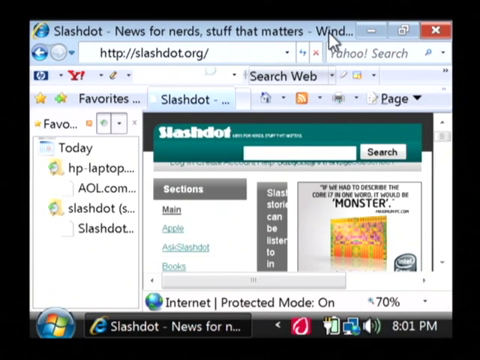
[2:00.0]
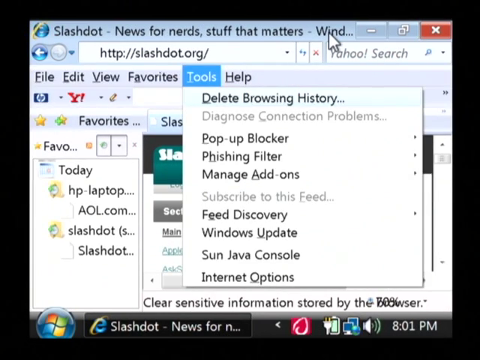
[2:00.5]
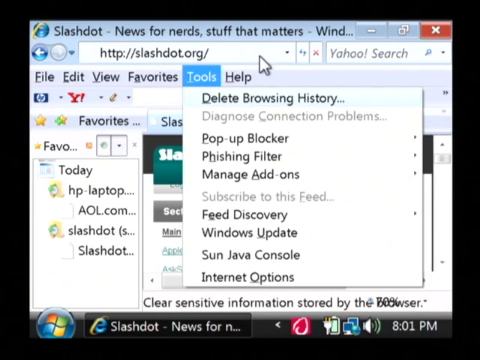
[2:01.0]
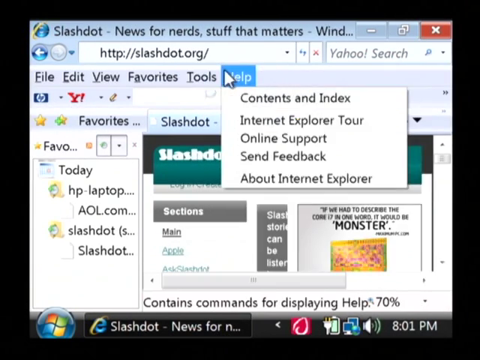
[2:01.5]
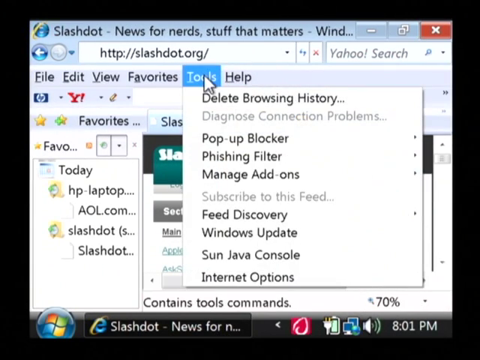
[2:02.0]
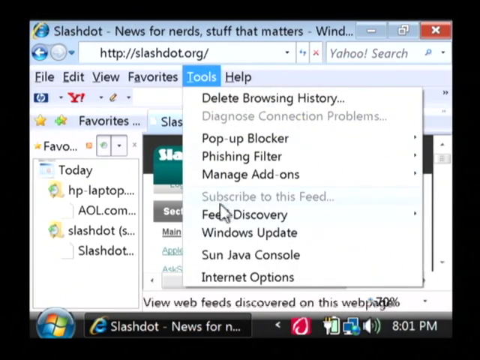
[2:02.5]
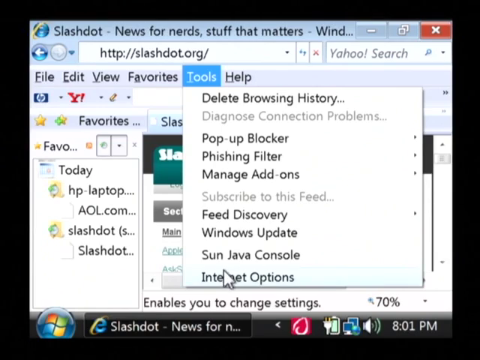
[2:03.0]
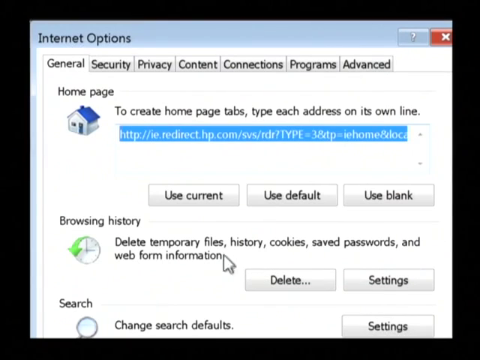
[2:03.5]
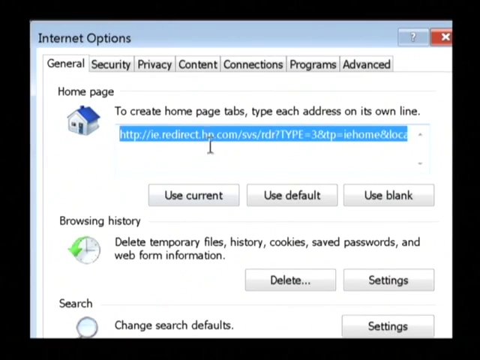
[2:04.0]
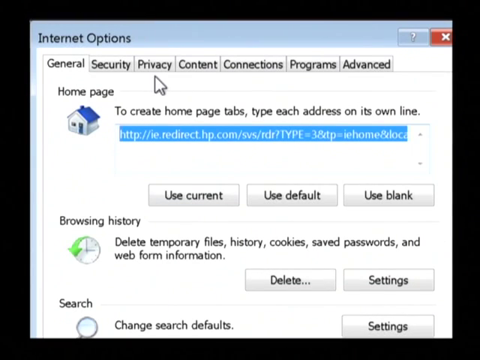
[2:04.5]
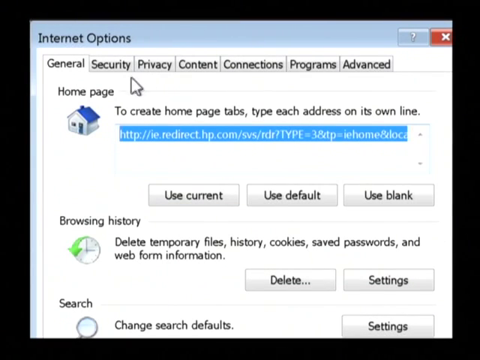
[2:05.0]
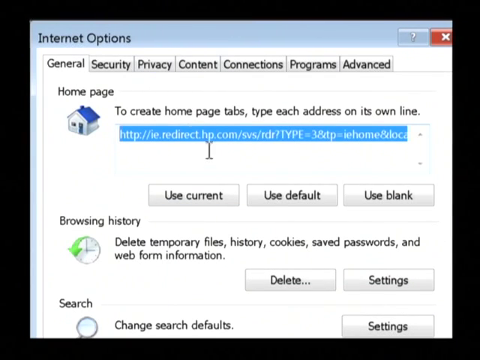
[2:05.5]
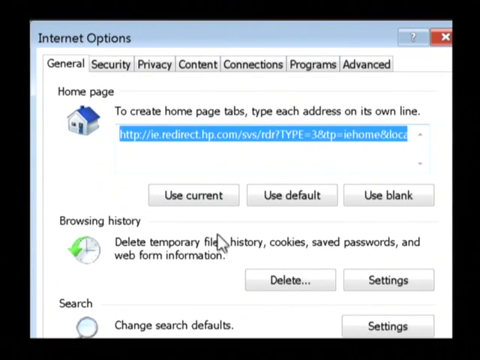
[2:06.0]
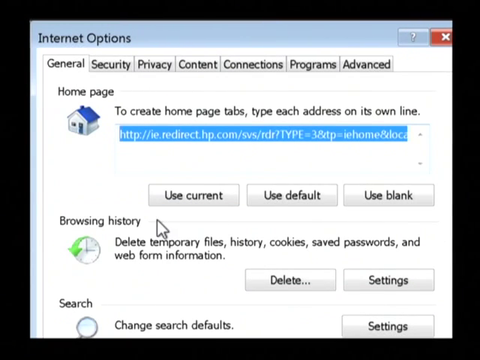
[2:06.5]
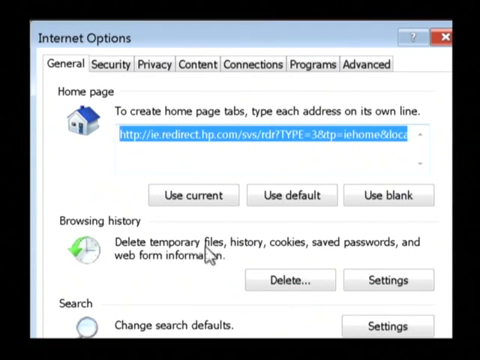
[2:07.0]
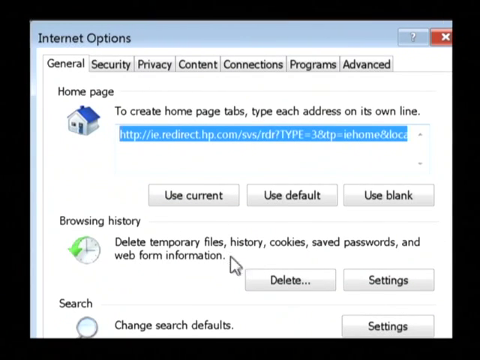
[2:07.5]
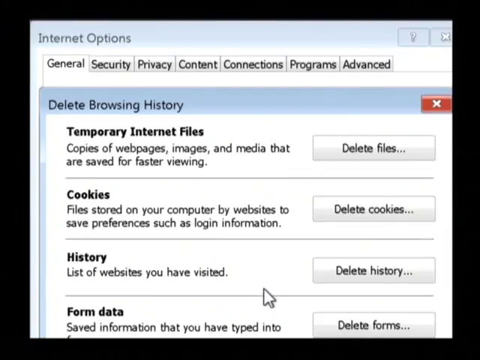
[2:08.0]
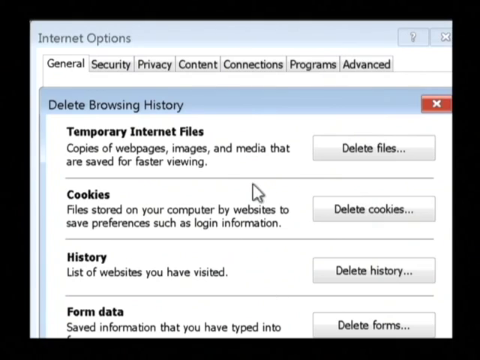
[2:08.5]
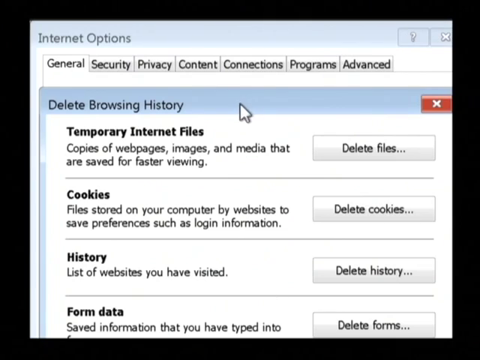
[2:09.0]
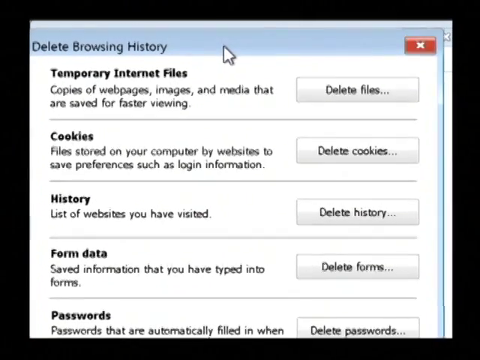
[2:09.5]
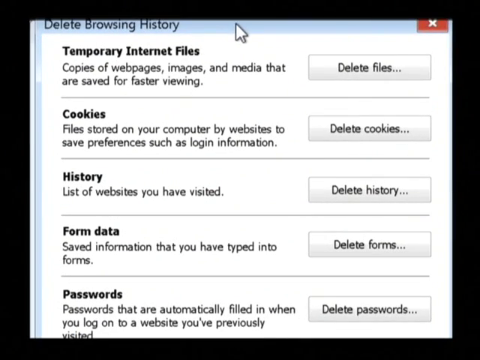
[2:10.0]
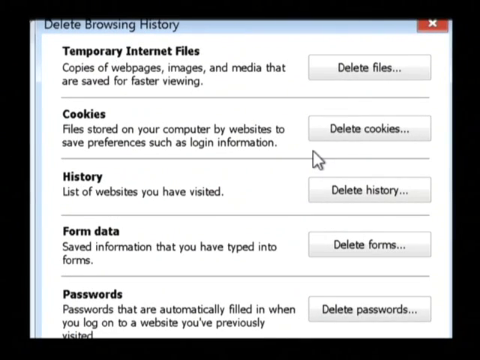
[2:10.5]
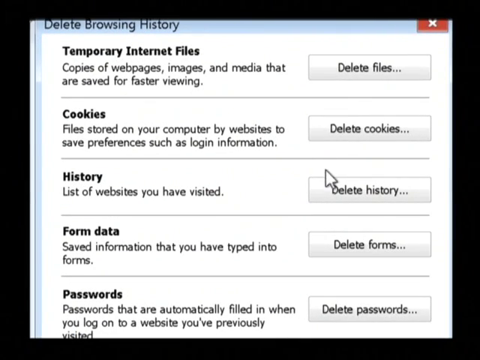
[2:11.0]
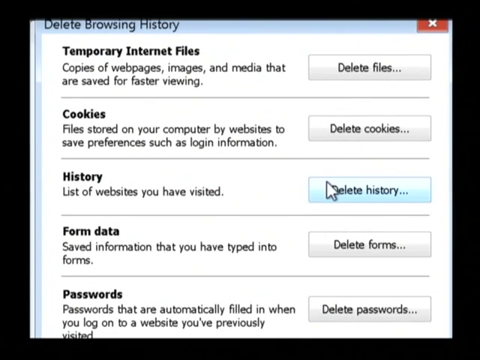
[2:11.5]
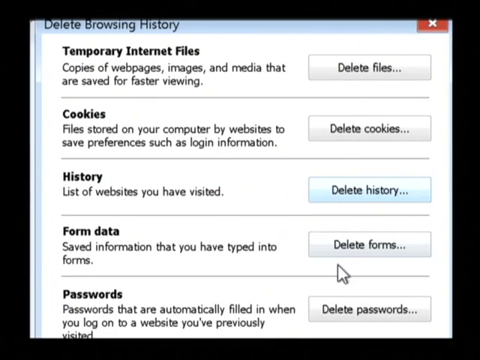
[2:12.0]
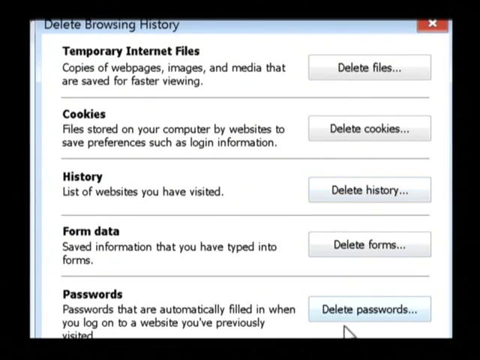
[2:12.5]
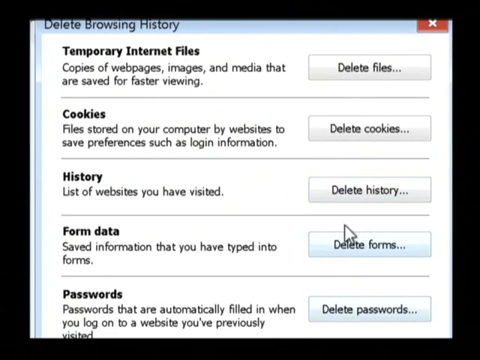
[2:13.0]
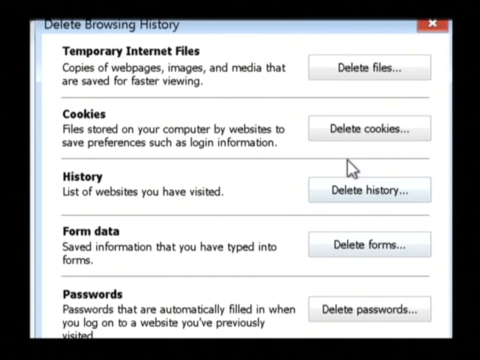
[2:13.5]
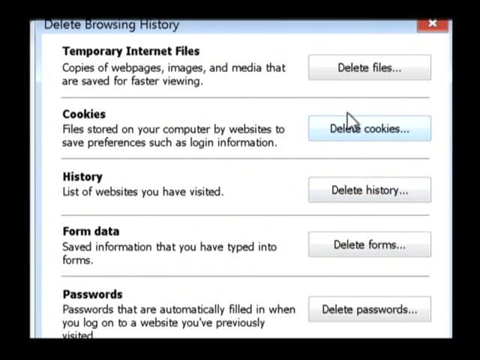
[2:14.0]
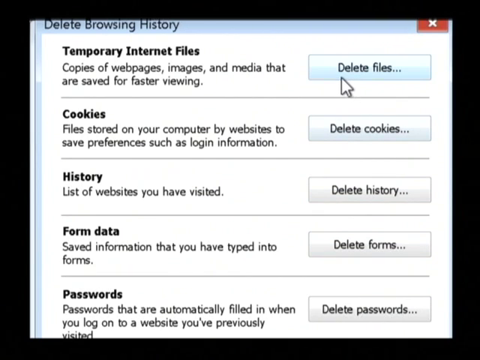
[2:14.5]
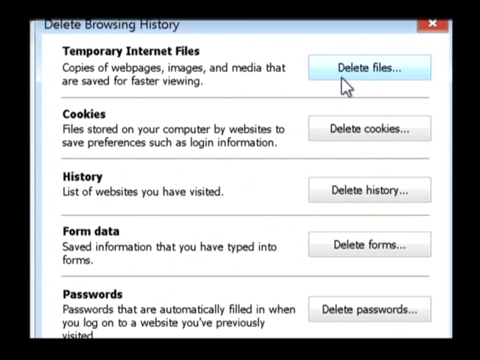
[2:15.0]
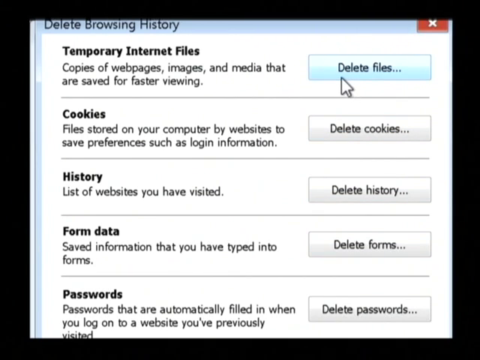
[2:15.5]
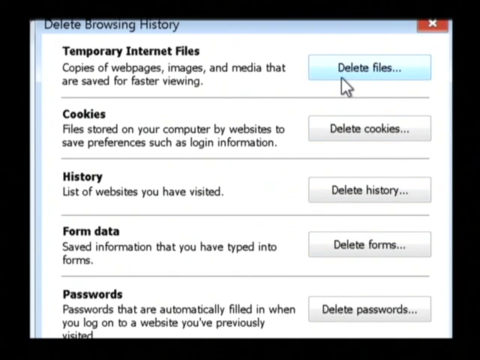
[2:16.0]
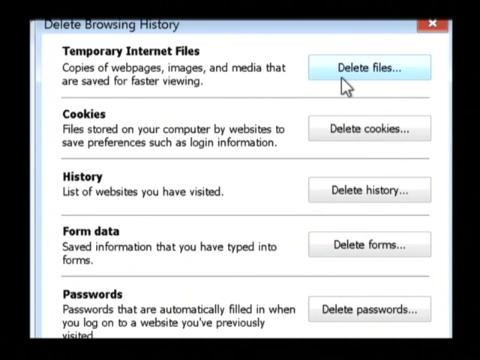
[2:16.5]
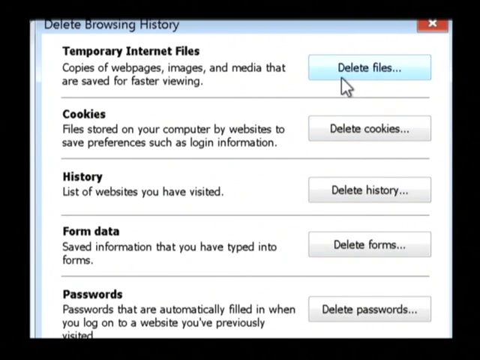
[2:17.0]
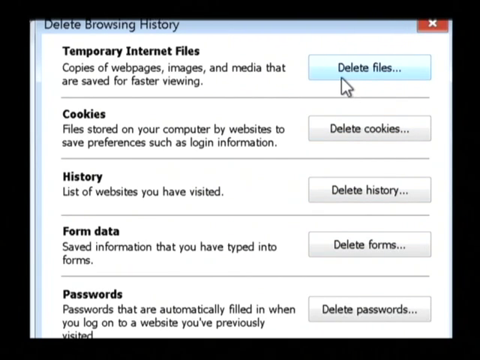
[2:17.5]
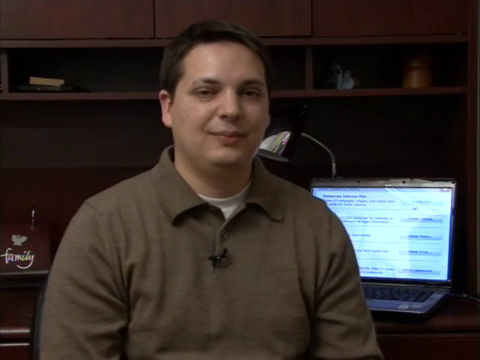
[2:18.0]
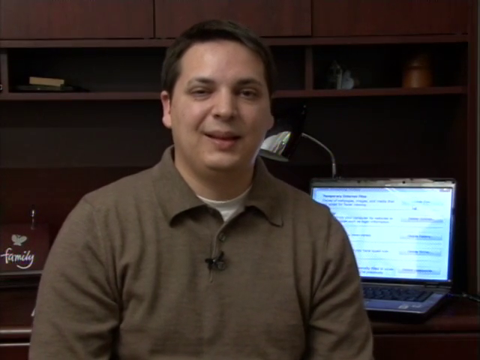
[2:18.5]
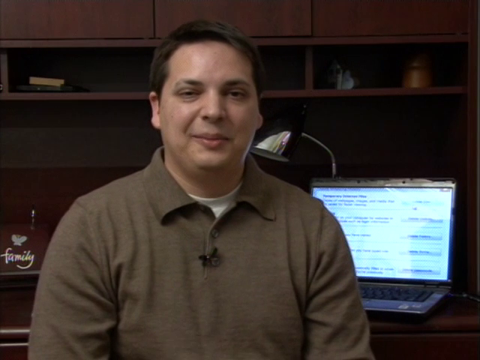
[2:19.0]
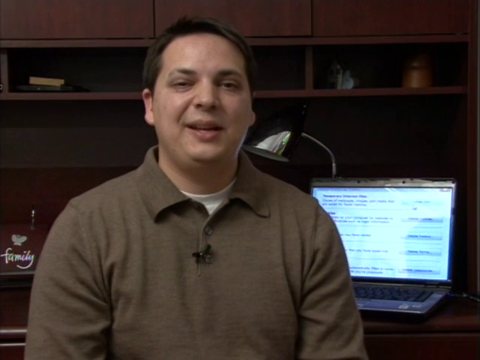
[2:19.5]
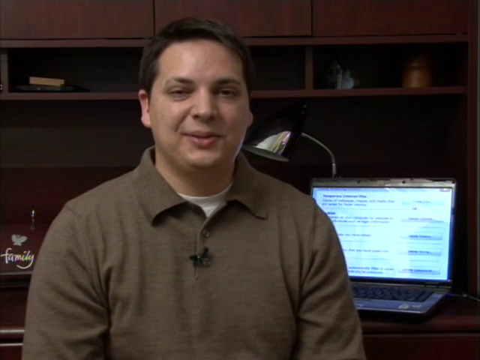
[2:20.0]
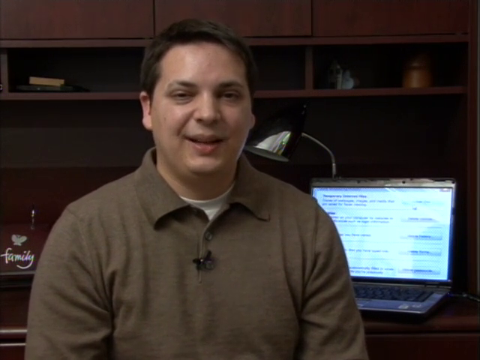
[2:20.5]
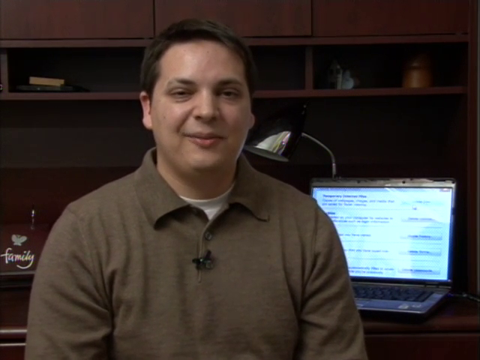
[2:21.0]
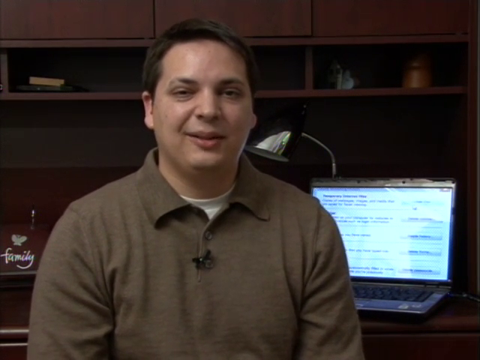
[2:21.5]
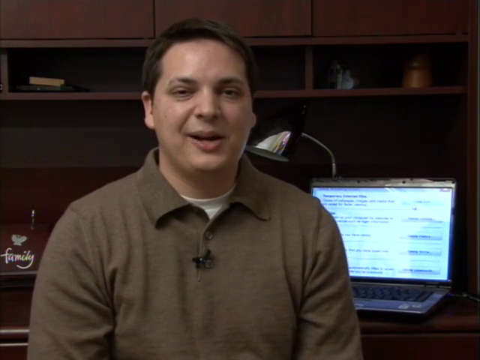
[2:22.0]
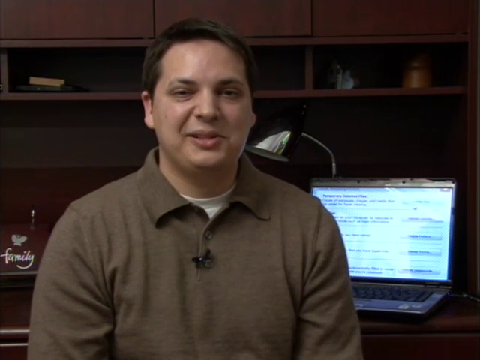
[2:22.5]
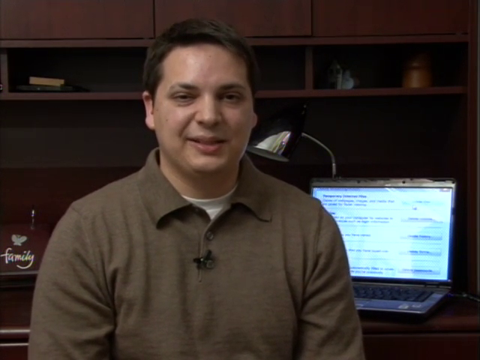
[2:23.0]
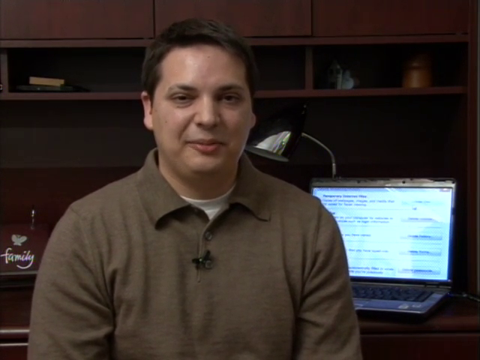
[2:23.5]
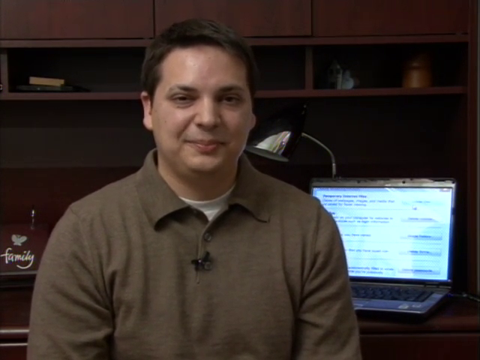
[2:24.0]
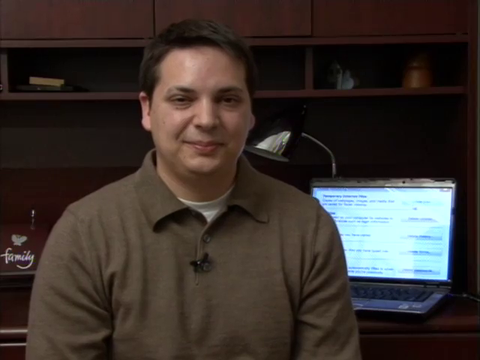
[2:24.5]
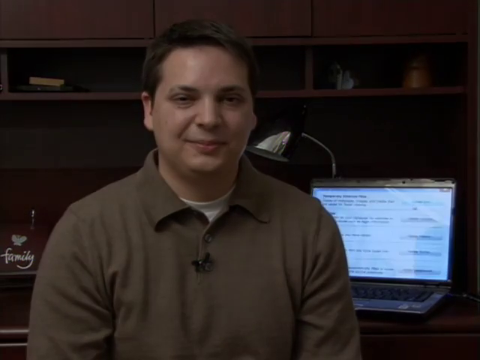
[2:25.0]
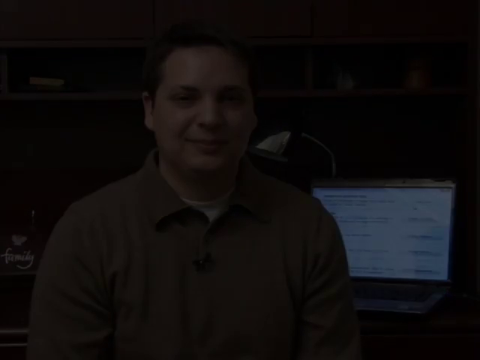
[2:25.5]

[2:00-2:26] The user goes into the menu bar again and, instead of staying in Favorites, moves one section to the right to Tools, clicking or hovering on it, and scrolls down to the very last option, Internet Options. The Internet Options pop-up loads. He scrolls down to Delete, clicks the Delete button, and the options for deleting browsing history are shown, apparently demonstrating how to delete or edit the history. The video then cuts from the computer screen back to the man at the desk, who apparently says goodbye, ending the training video.